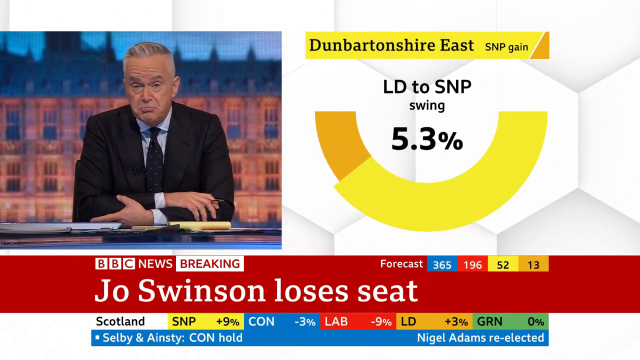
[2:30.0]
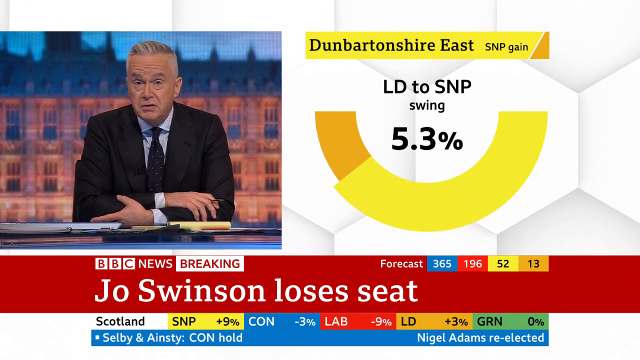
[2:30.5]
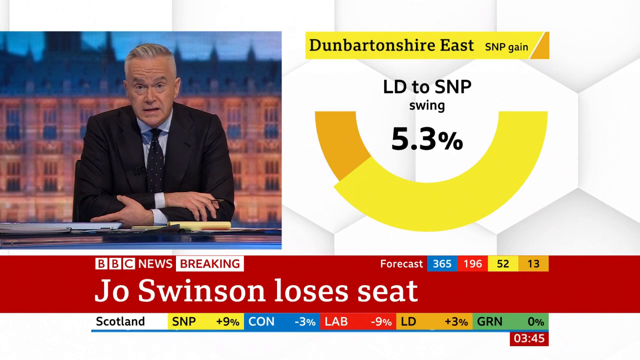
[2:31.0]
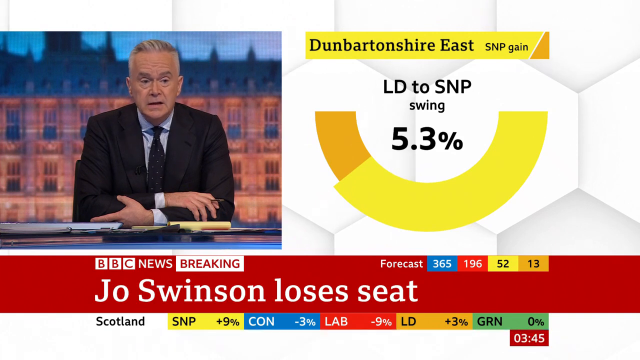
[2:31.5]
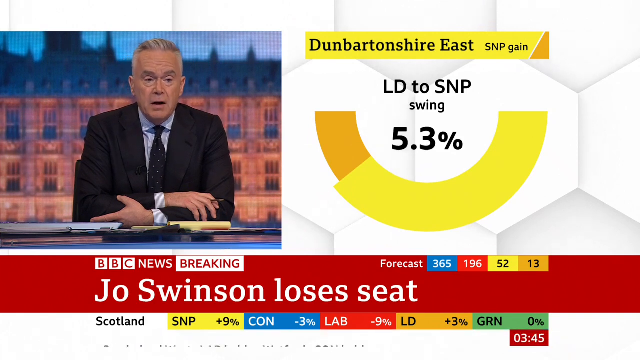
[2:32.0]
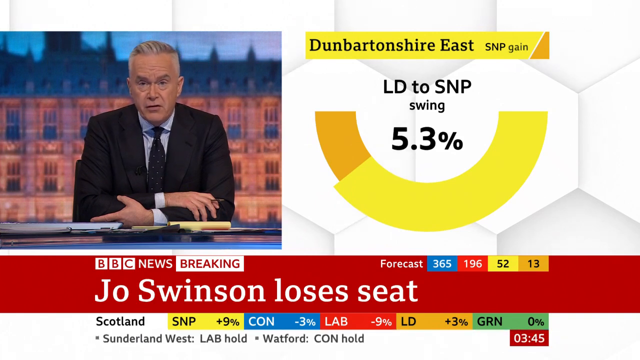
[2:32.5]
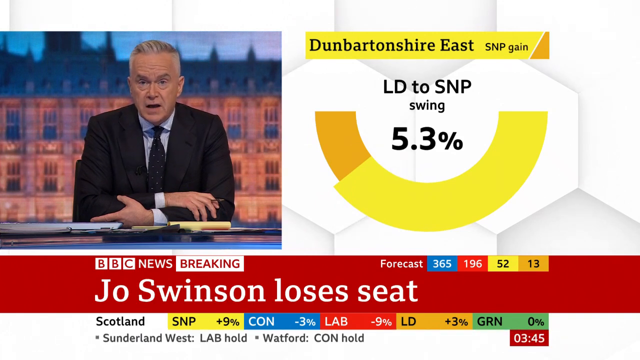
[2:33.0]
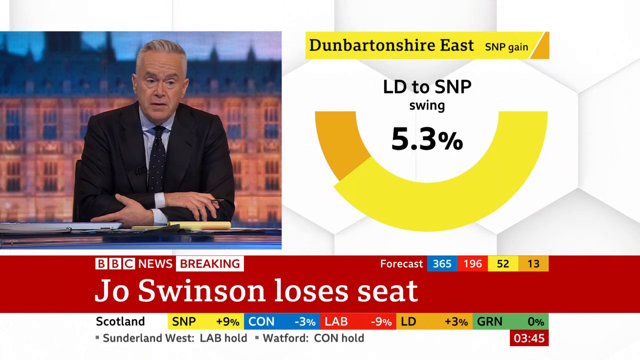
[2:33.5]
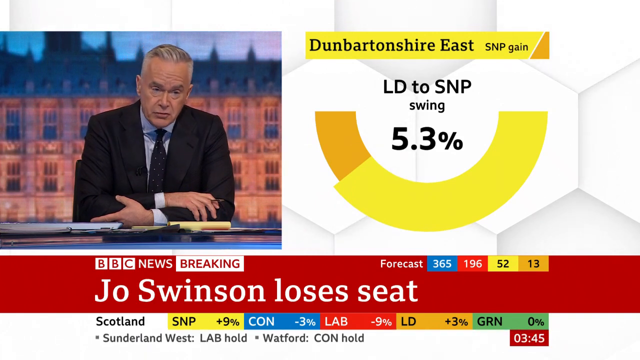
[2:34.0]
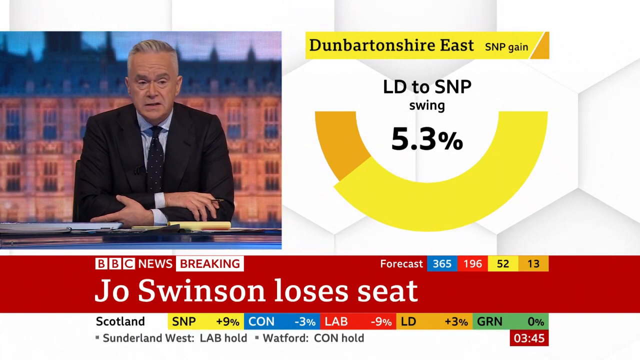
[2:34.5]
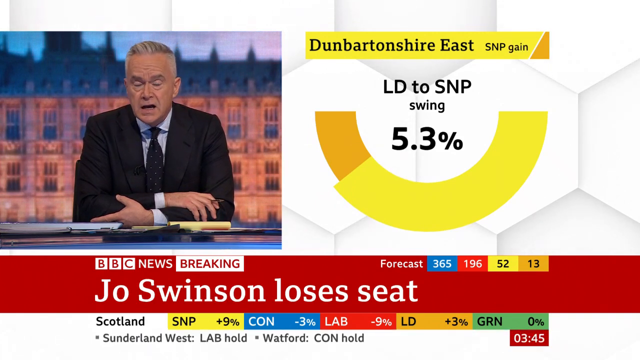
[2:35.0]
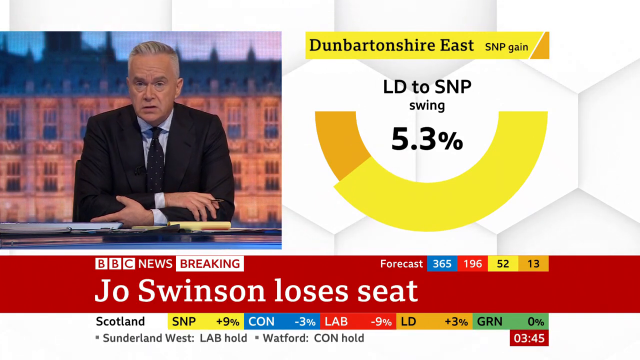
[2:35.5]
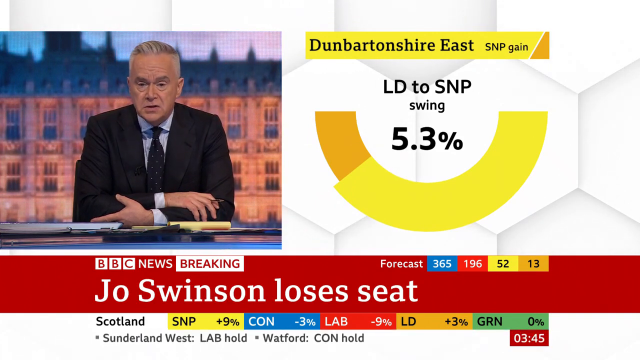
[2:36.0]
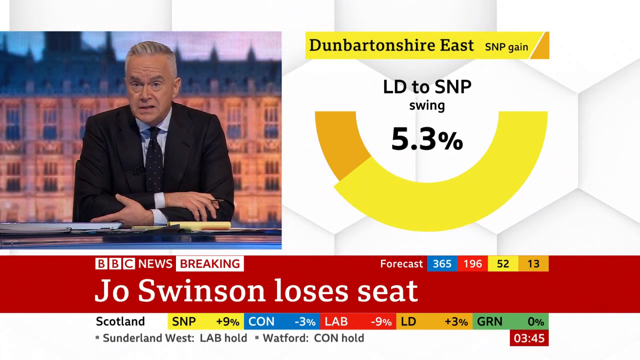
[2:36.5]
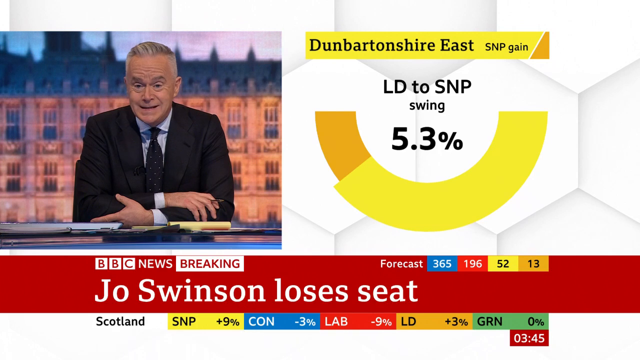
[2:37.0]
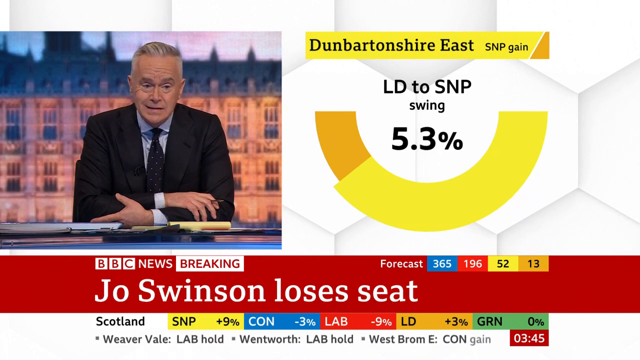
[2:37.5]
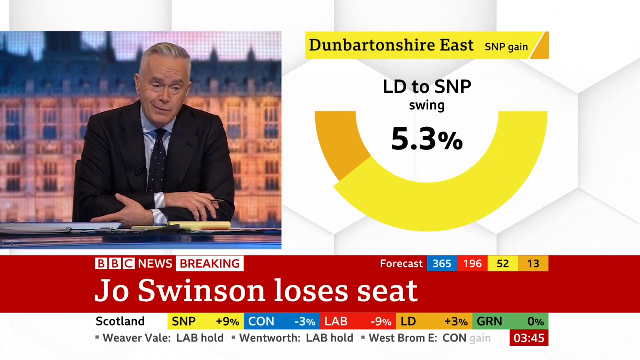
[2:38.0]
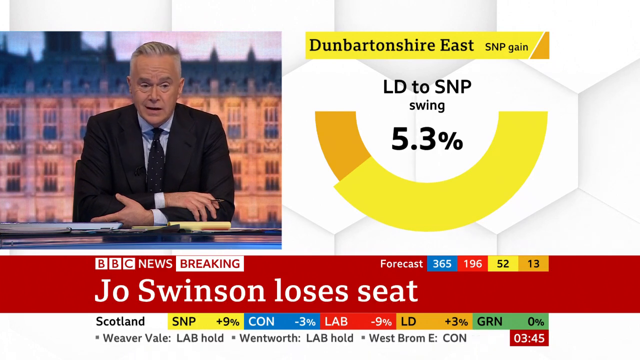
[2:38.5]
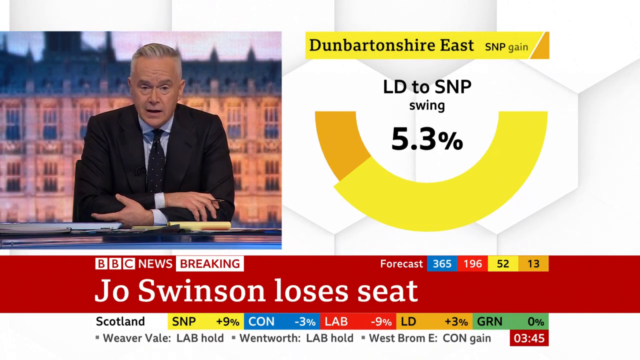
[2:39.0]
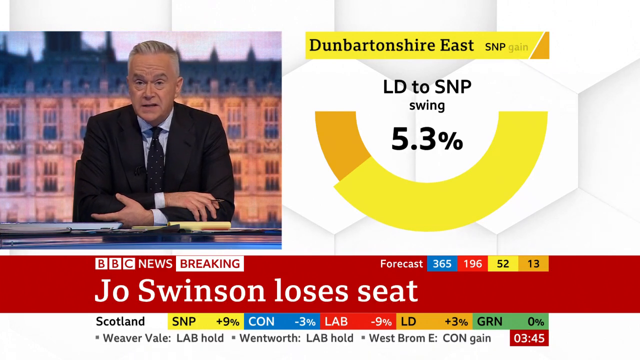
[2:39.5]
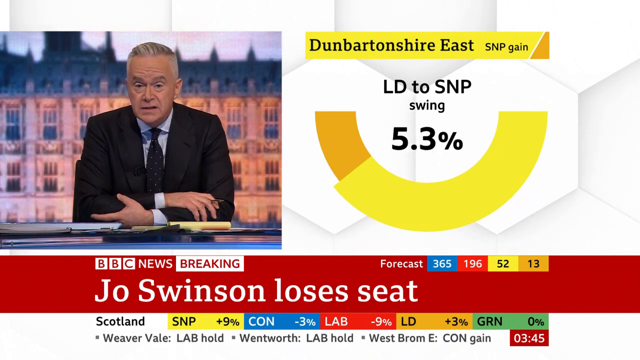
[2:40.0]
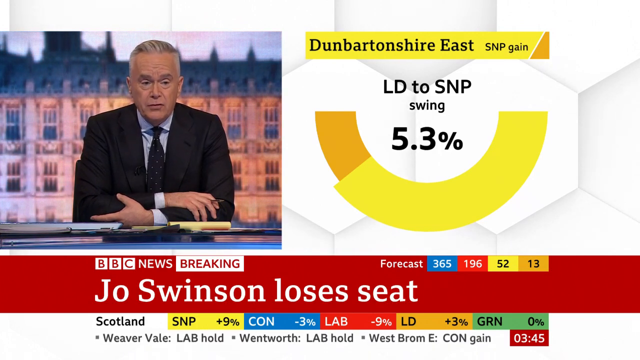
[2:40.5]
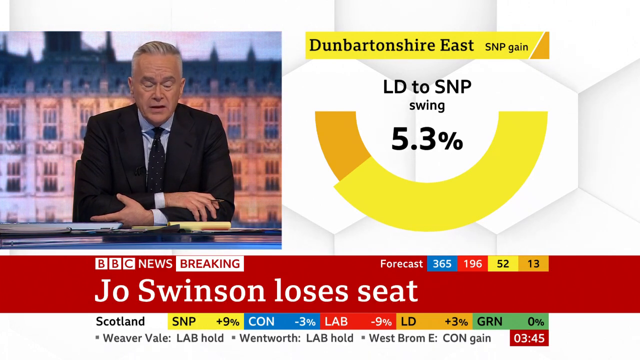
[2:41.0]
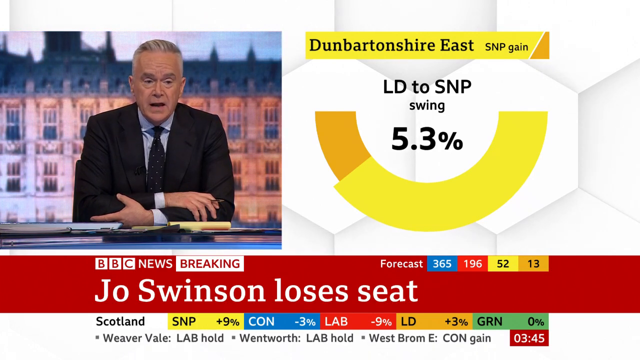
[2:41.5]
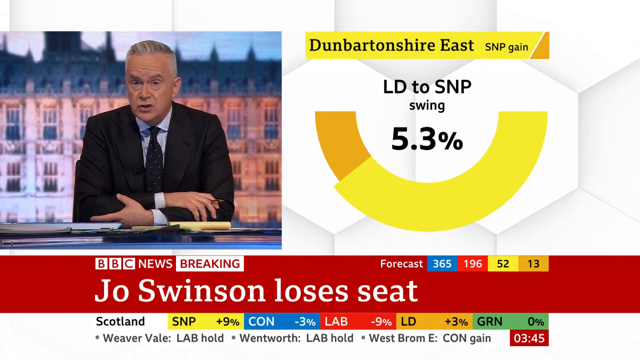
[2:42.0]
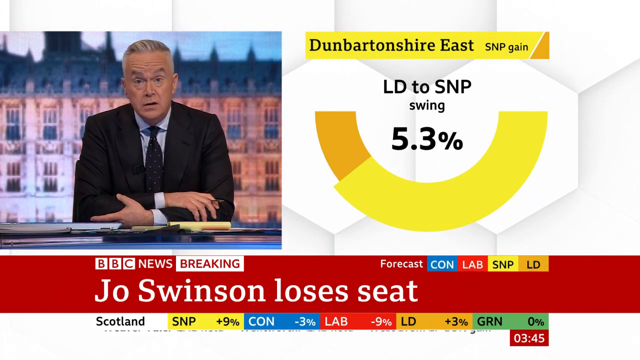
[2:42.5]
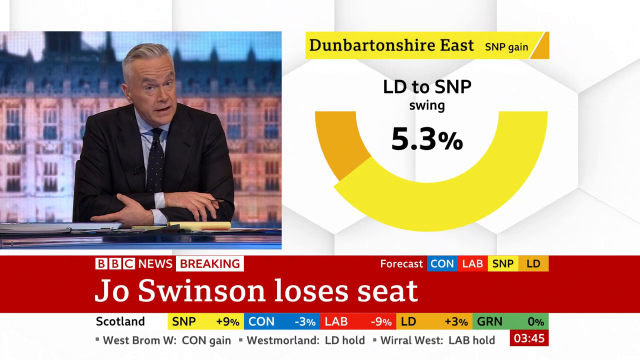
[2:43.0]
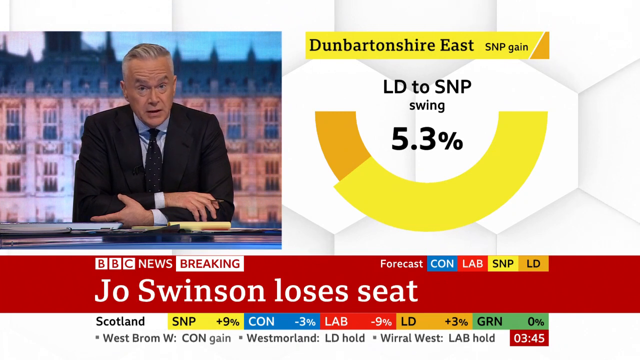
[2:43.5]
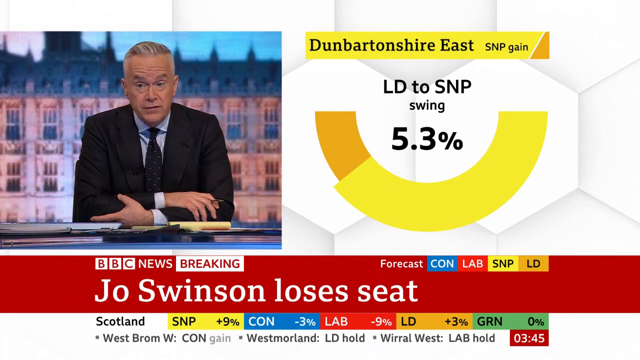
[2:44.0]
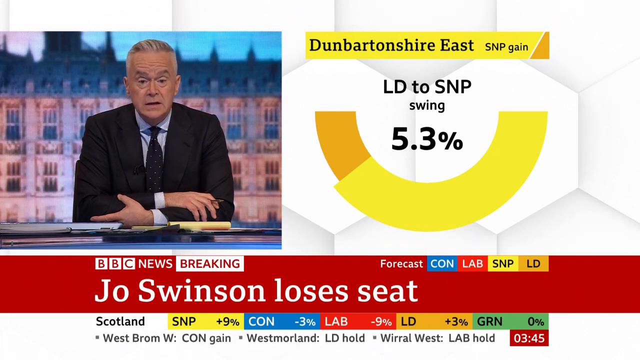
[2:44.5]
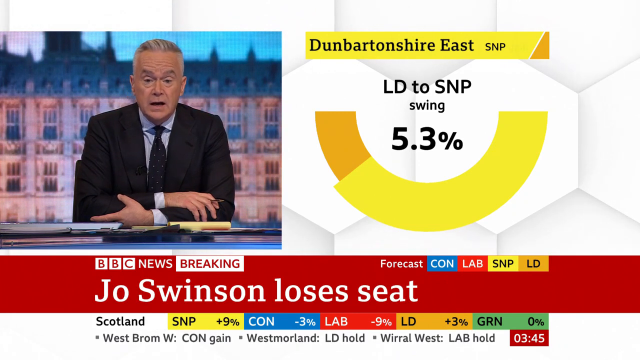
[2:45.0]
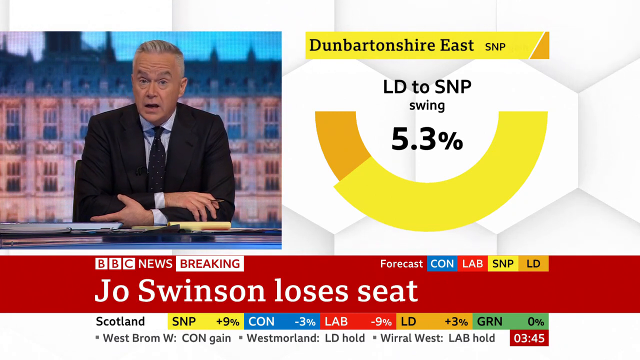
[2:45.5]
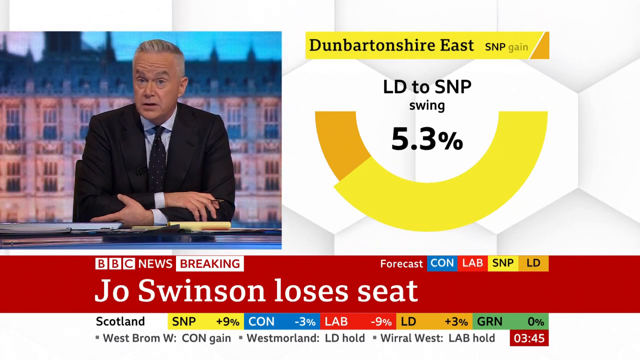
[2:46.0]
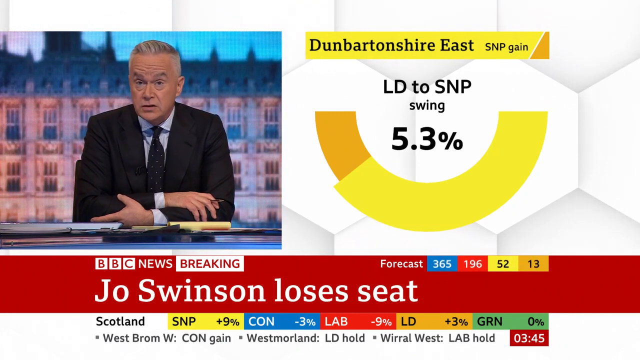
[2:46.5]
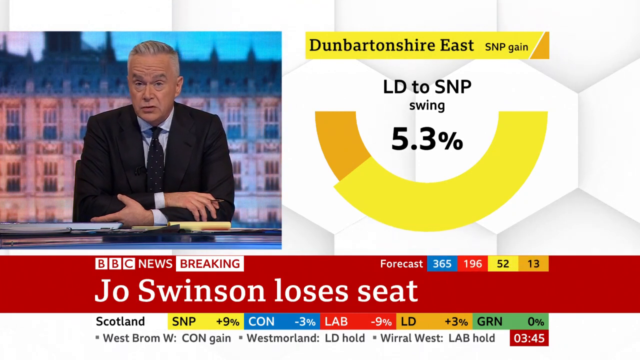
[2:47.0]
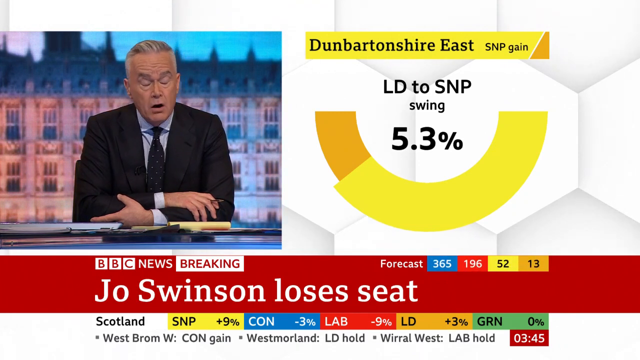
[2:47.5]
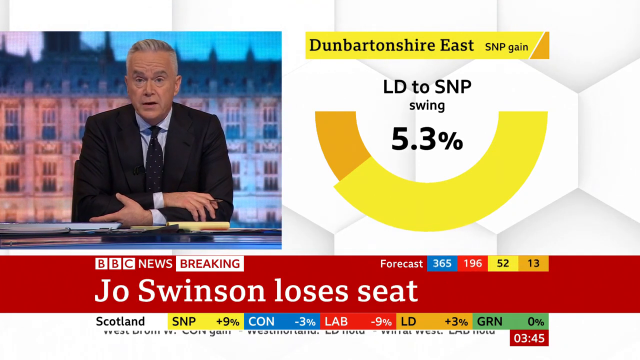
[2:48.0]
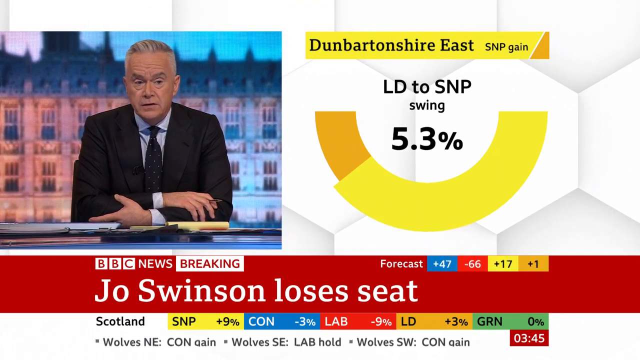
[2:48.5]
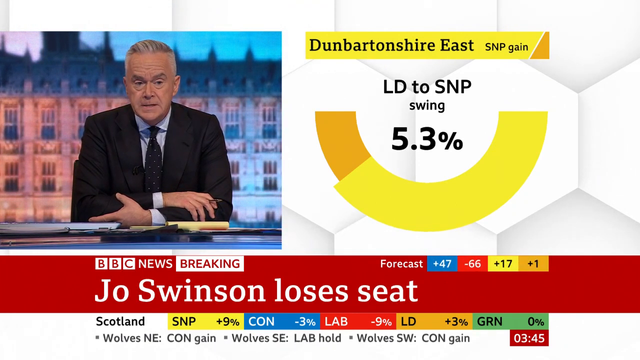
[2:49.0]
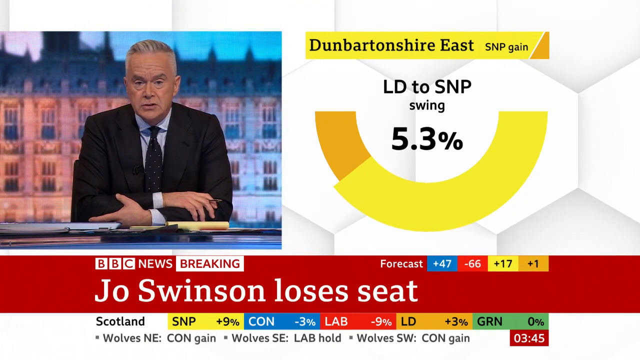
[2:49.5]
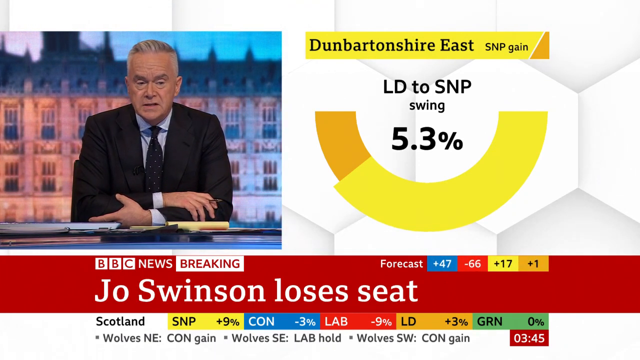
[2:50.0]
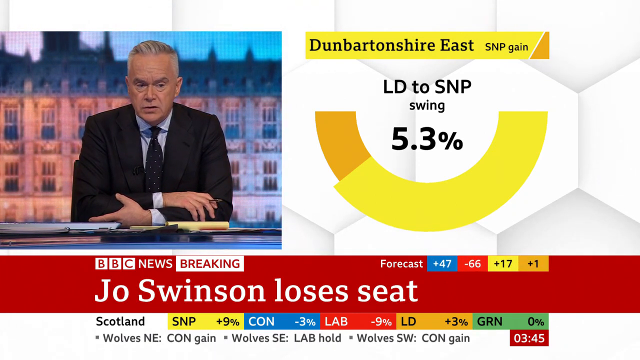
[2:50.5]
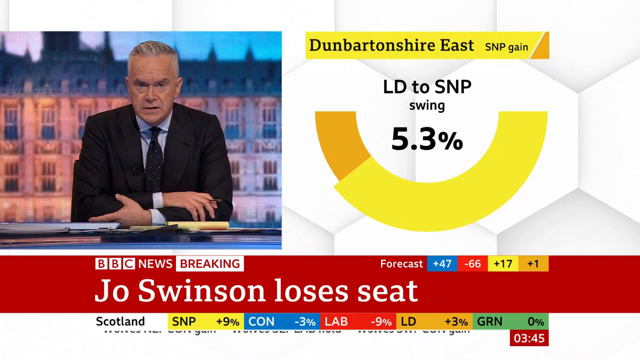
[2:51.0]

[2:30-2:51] Another graphic appears headed "LD to SNP swing 5.3%", showing a greatly enlarged yellow section of an arc with a small gold section of the arc to the left. The man on the left is talking. At the top right, above "Dumbartonshire East SNP", the word "gain" flashes over and over. The forecast at the bottom shows blue 365, red 196, yellow 52 and gold 13. At the bottom, "CON" appears with "gain" flashing beside it over and over. Results for different areas scroll along the bottom, apparently whether seats were gained or lost, including "Wentworth LAB hold", "West Brom West CON gain" and "Westmoreland". In red at the bottom it reads "Jo Swinson loses seat."